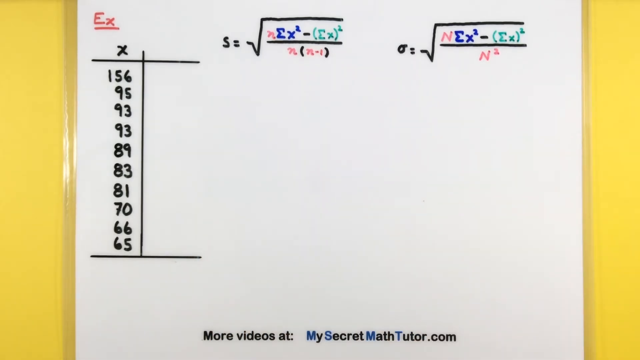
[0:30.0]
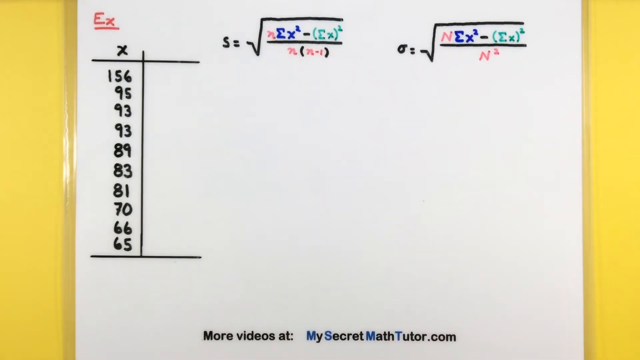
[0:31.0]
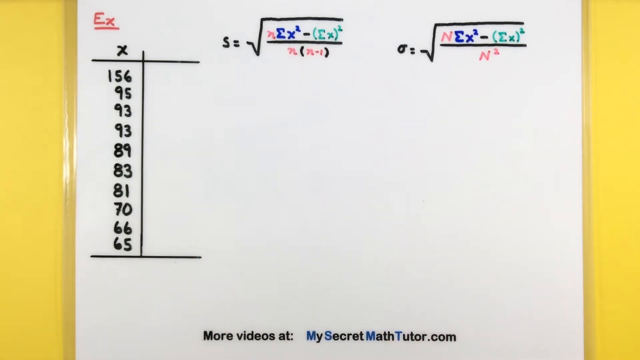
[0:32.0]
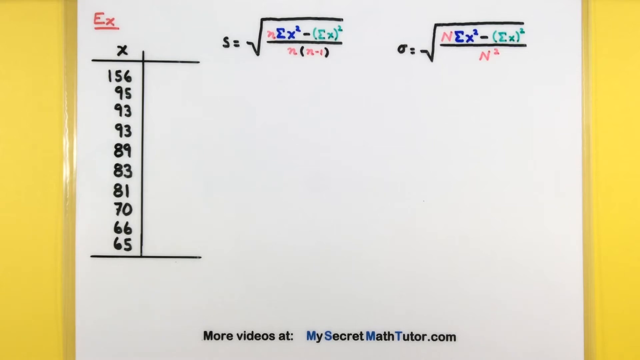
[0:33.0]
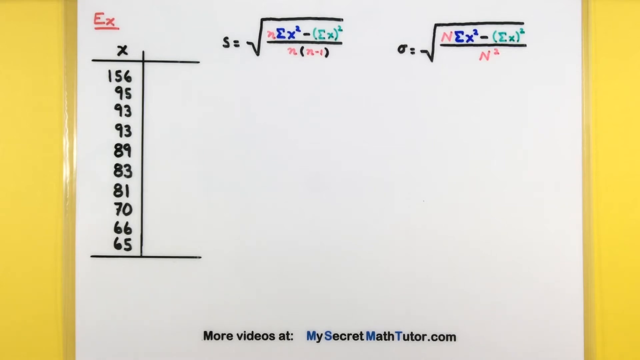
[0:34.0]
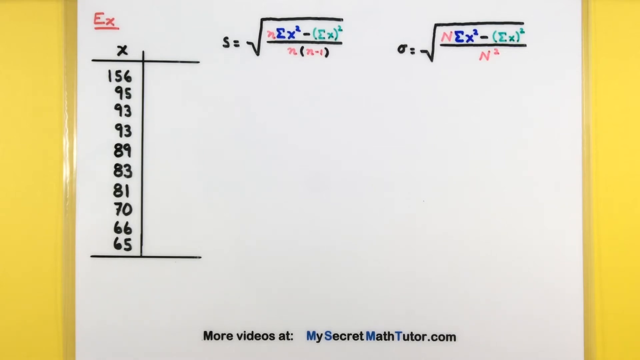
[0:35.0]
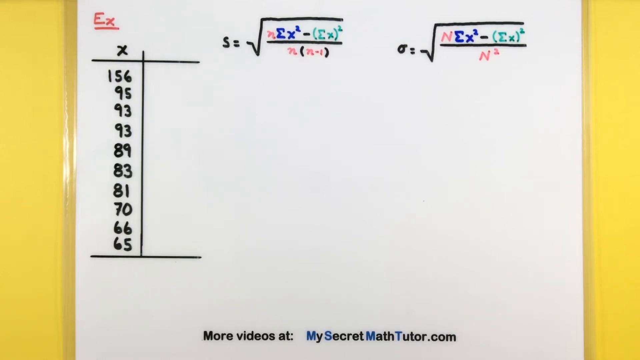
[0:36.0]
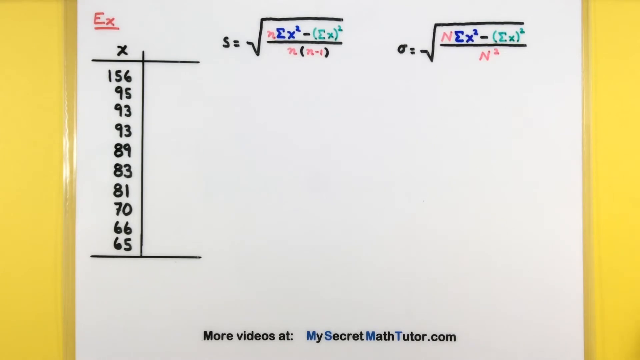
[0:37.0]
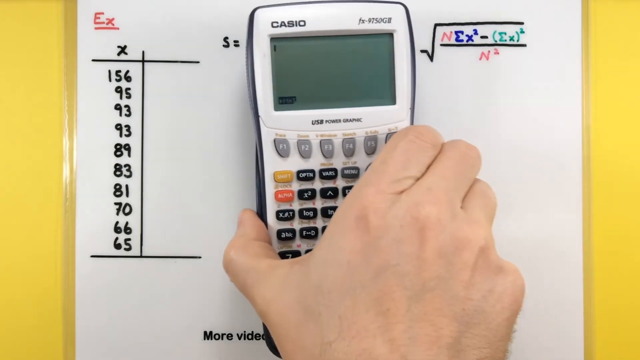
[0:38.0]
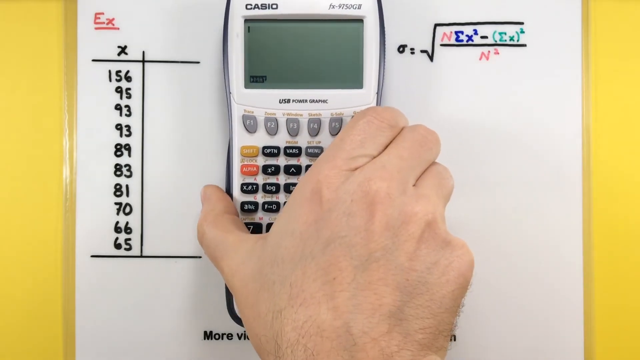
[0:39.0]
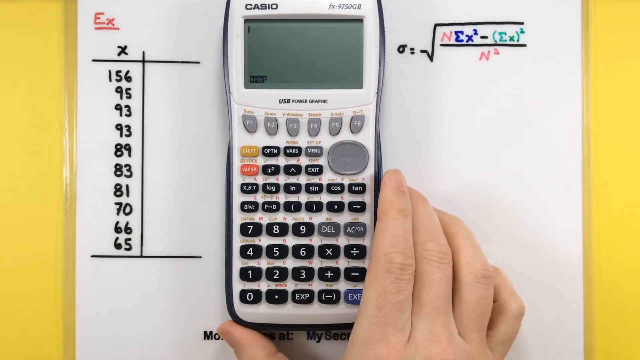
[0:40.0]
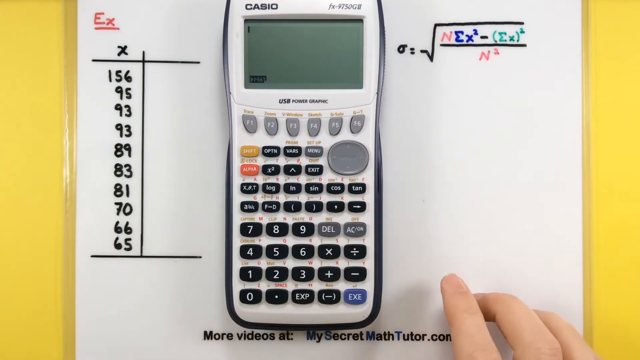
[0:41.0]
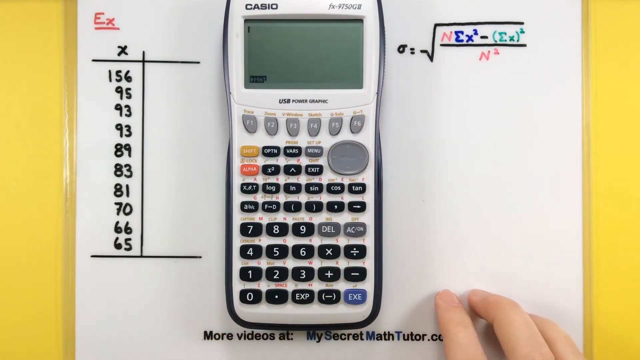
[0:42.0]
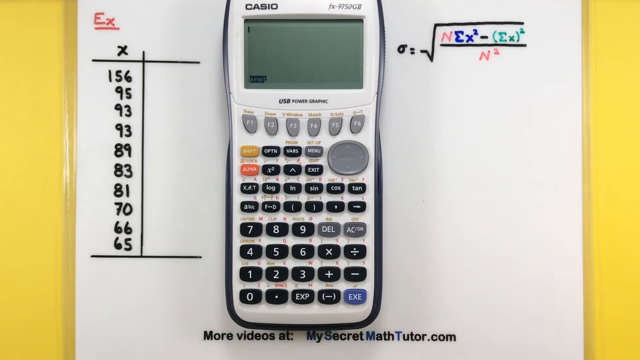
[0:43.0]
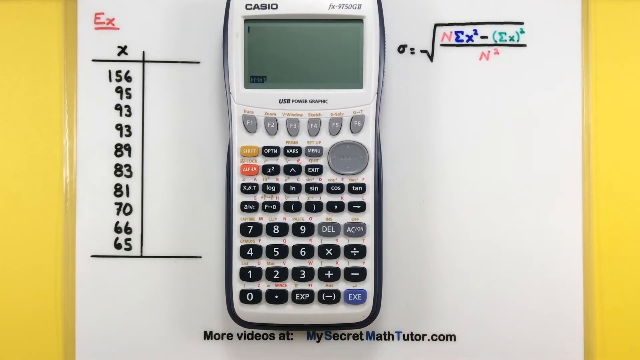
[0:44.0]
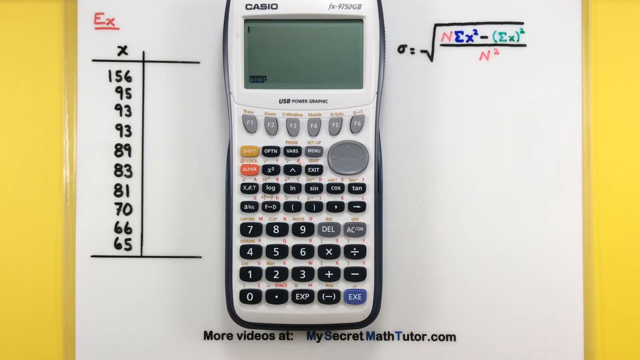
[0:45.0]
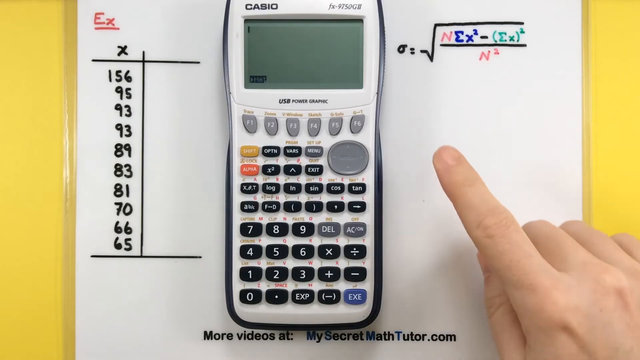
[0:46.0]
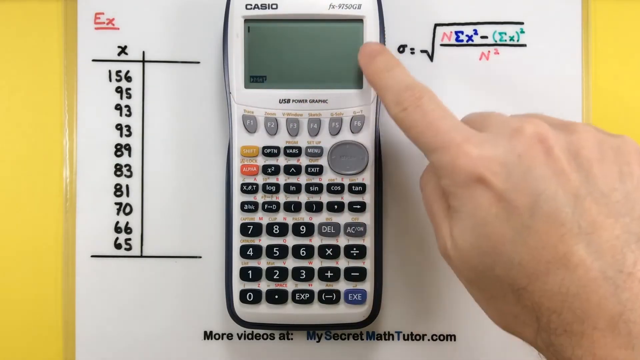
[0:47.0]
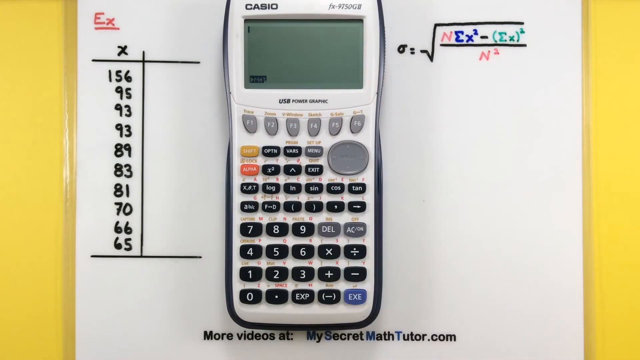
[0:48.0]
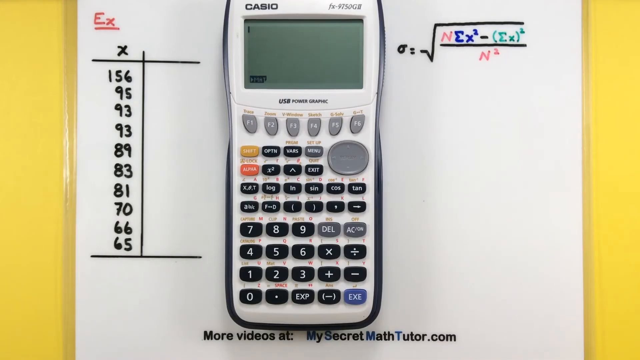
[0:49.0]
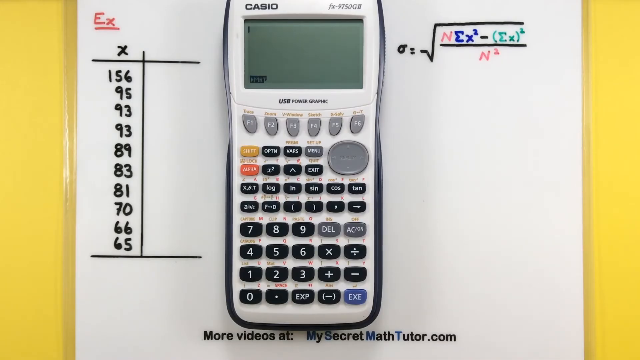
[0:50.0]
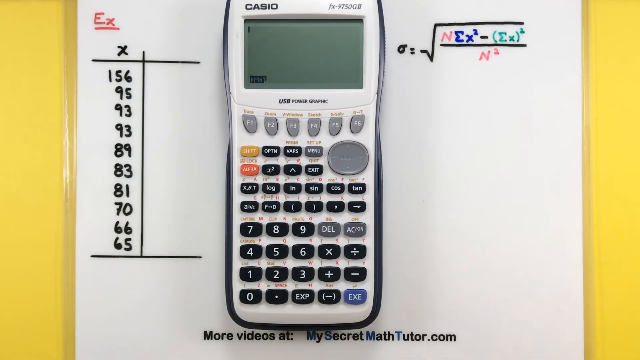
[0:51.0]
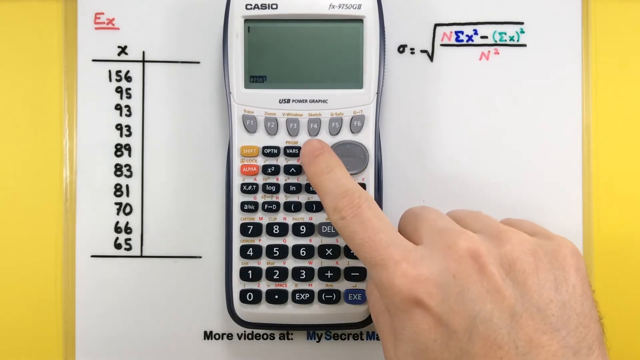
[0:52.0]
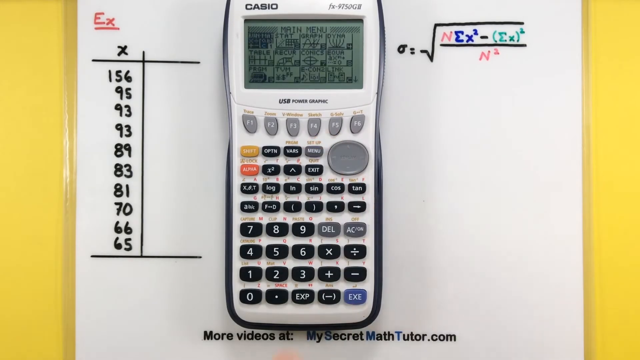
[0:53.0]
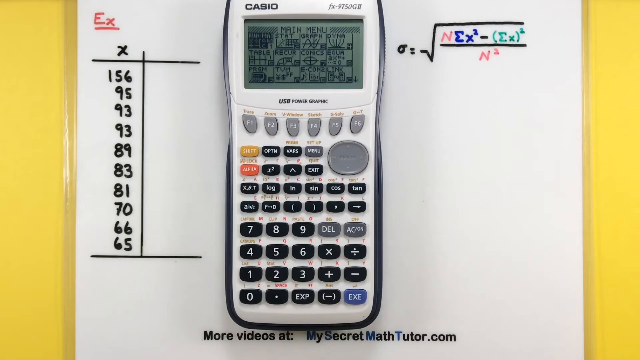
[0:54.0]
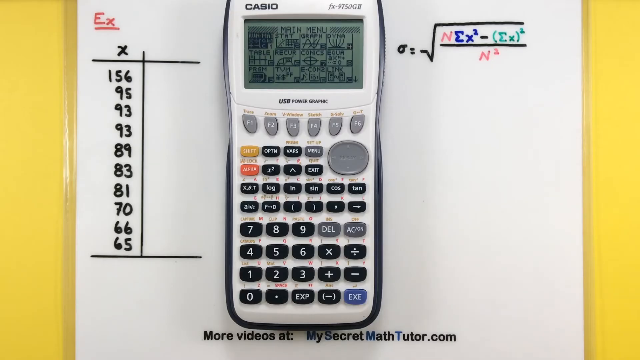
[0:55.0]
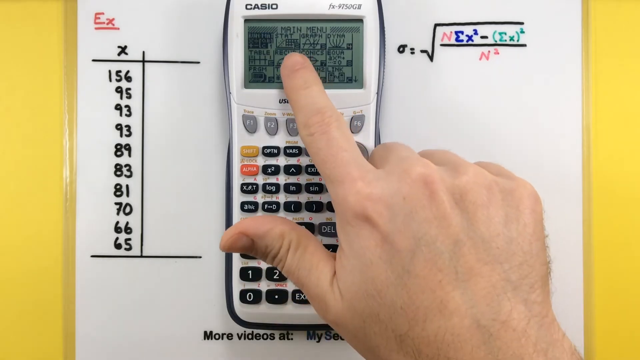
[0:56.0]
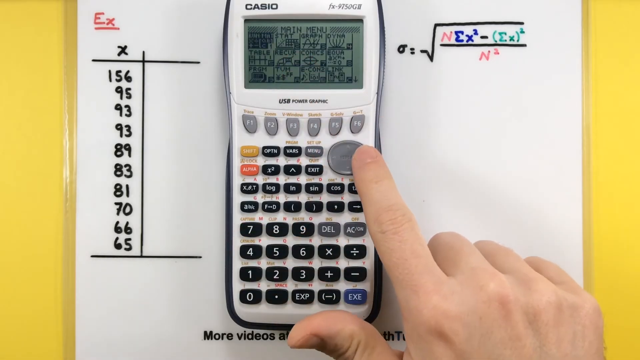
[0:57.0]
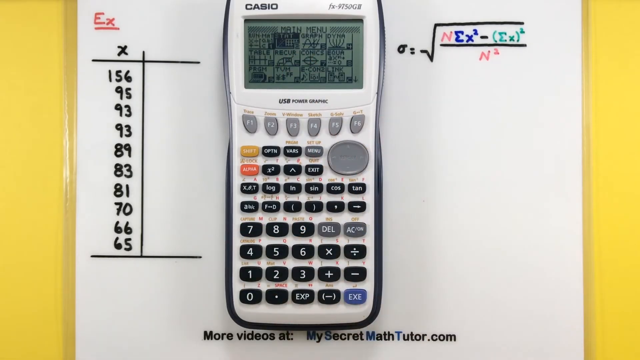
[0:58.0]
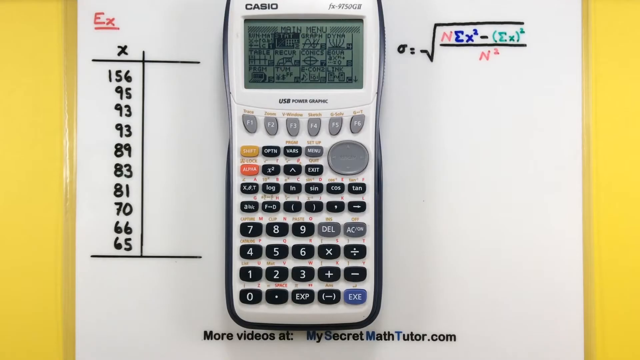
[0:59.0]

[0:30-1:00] A laminated piece of paper with various calculations and numbers written on it is on a yellow desk. On the top left, written in red marker, is "EX", underlined. Below that is a chart with "EX" at the top and the numbers 156, 95, 93, 93, 89, 83, 81, 70, 66, and 65 going from top to bottom. The column to the right of it is empty. On the top right are two calculations. A calculator is placed on top of the paper, and a right hand holds it from the right edge. The right hand then makes a pointing motion and clicks the menu button on the calculator, and a menu appears on the calculator screen.